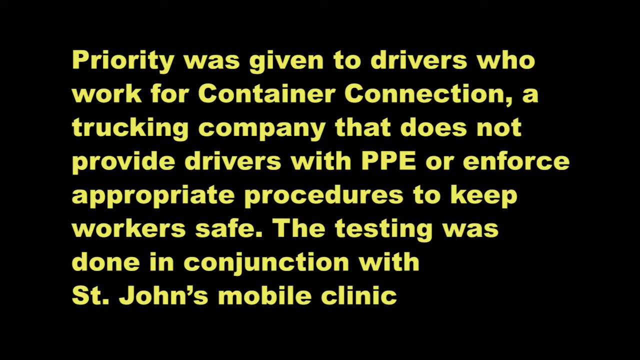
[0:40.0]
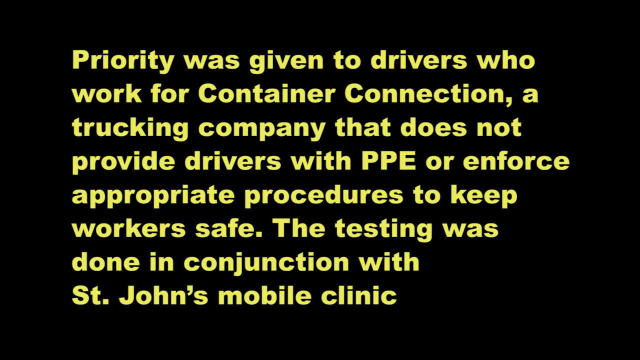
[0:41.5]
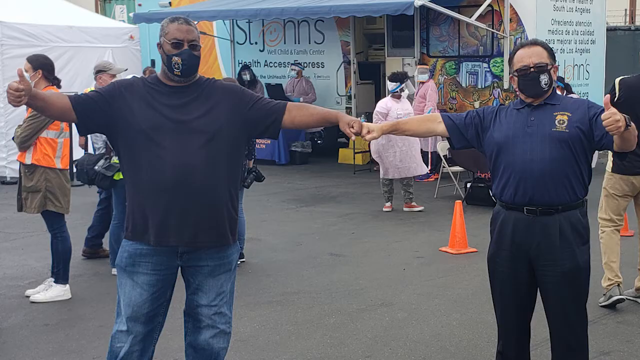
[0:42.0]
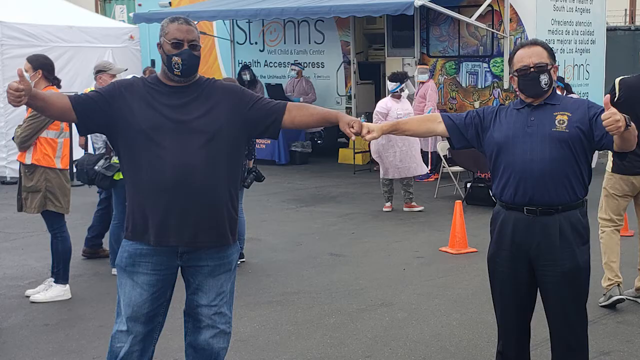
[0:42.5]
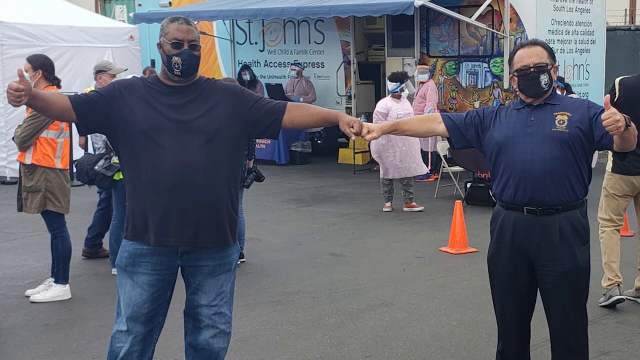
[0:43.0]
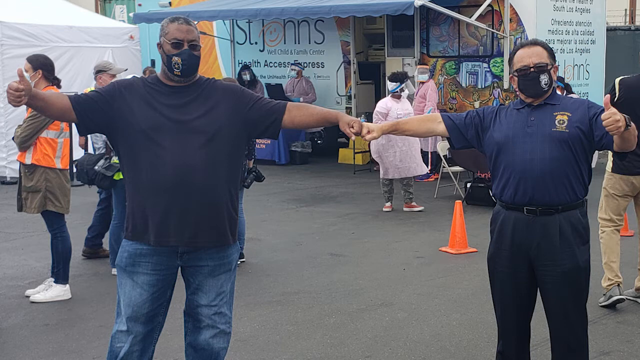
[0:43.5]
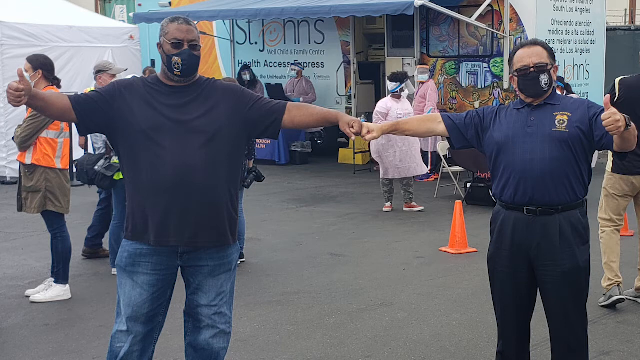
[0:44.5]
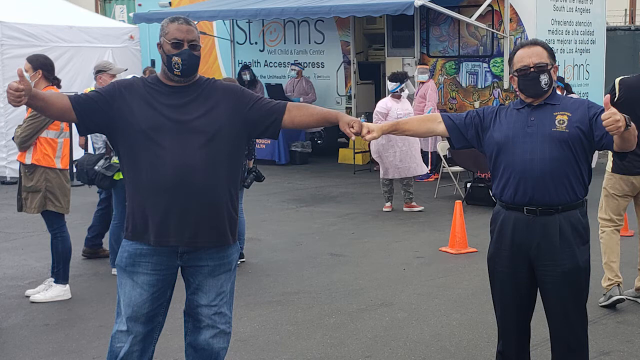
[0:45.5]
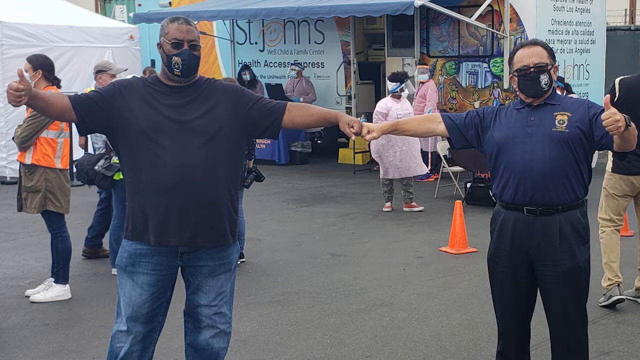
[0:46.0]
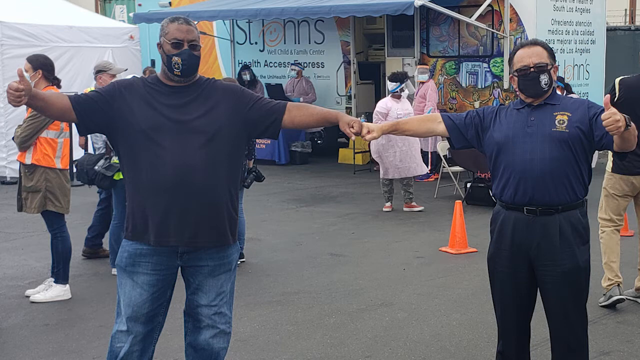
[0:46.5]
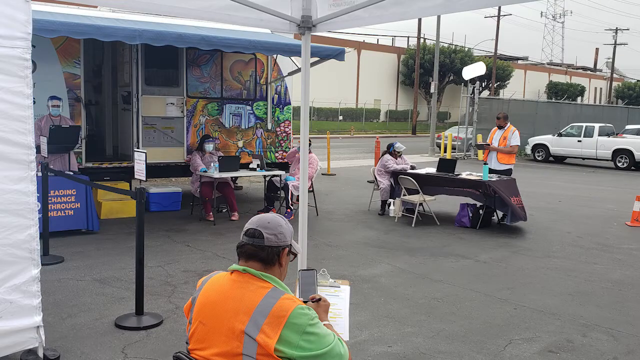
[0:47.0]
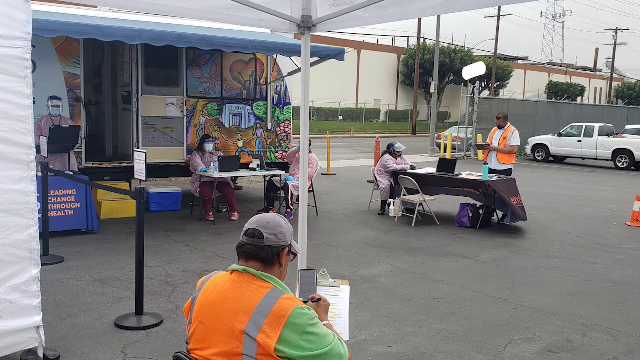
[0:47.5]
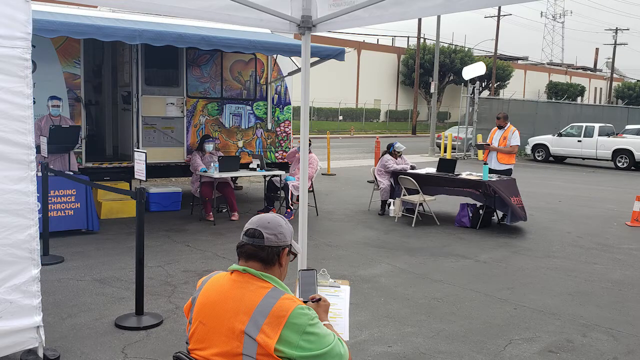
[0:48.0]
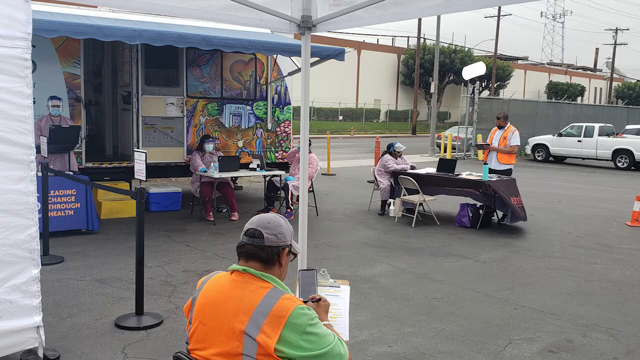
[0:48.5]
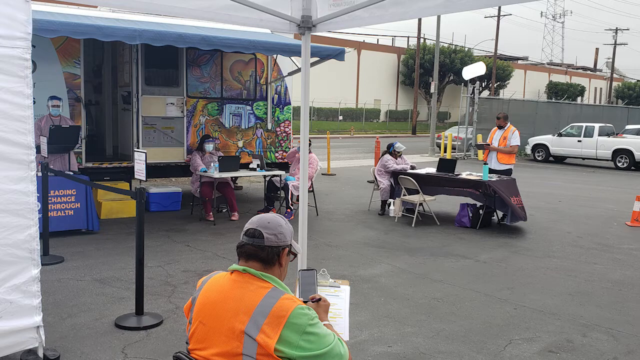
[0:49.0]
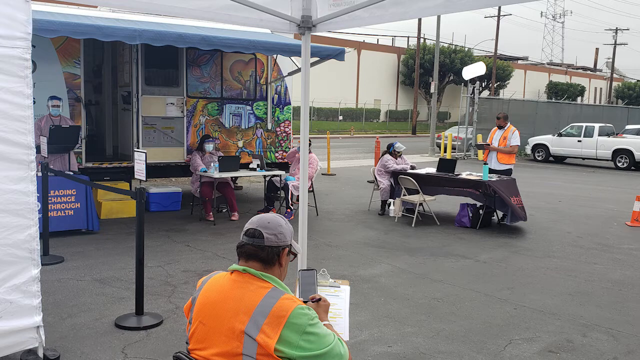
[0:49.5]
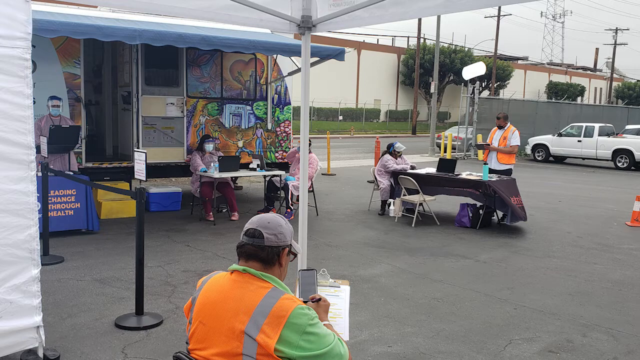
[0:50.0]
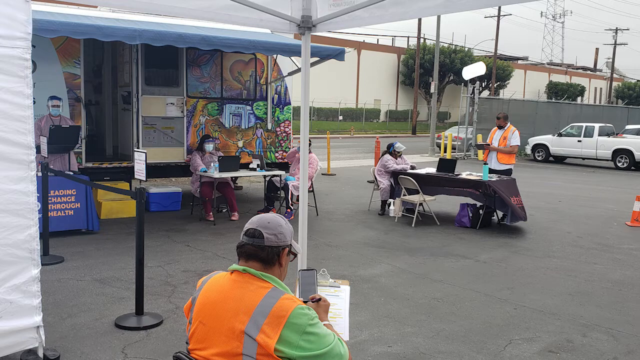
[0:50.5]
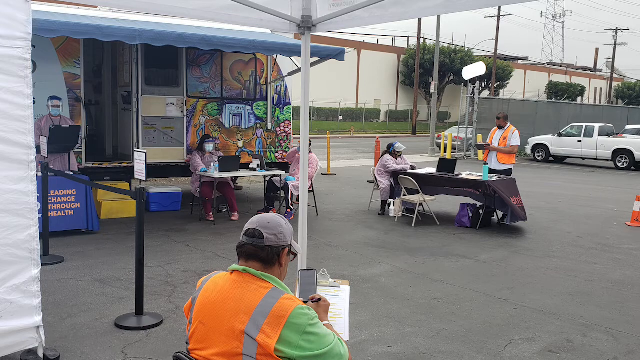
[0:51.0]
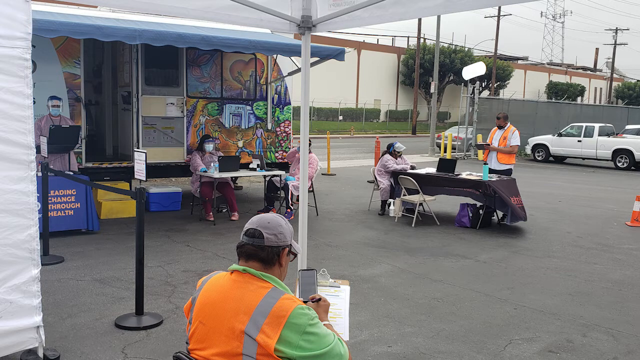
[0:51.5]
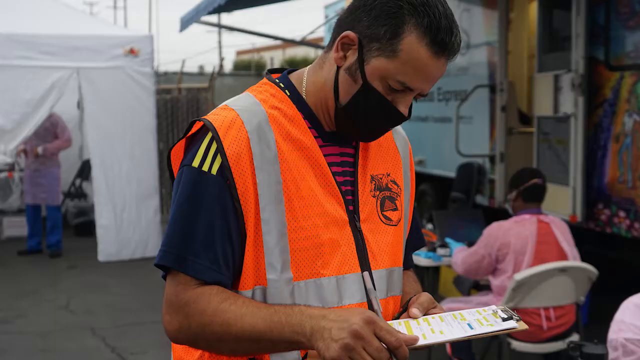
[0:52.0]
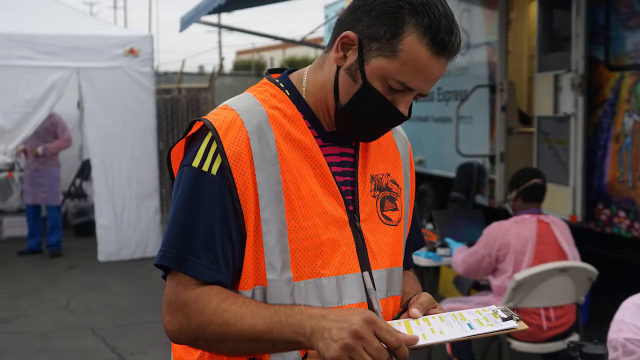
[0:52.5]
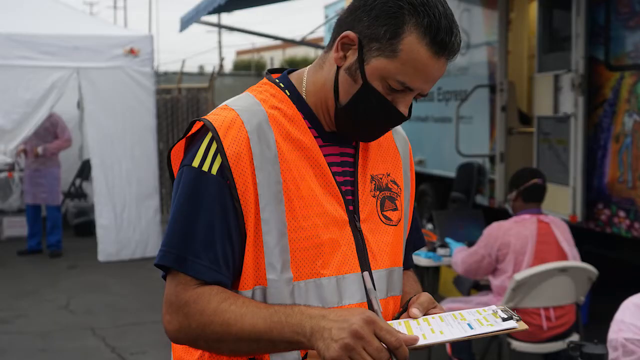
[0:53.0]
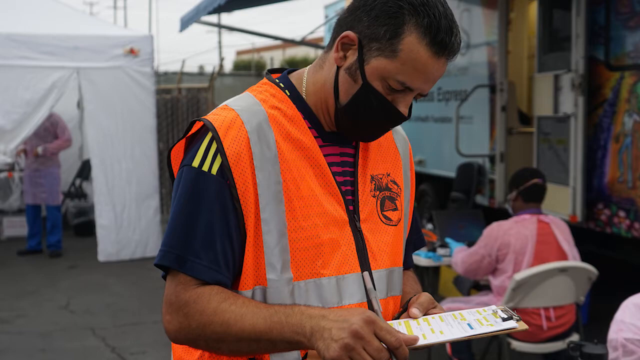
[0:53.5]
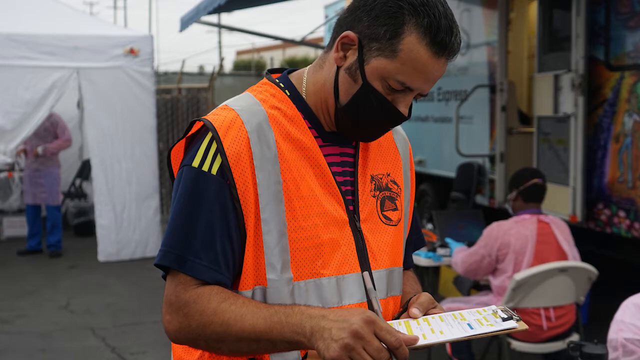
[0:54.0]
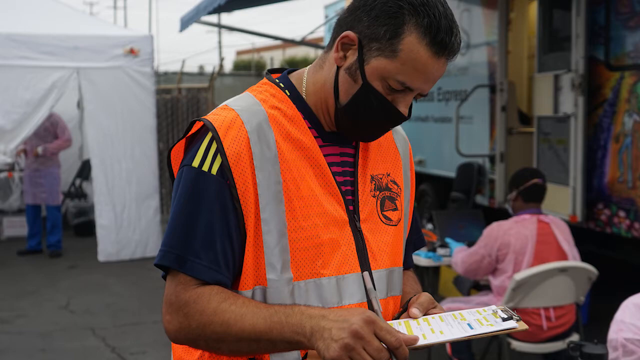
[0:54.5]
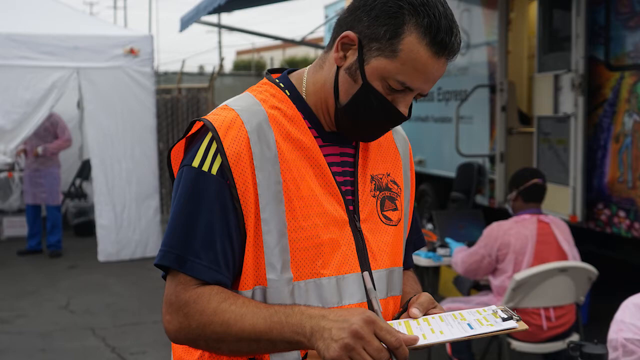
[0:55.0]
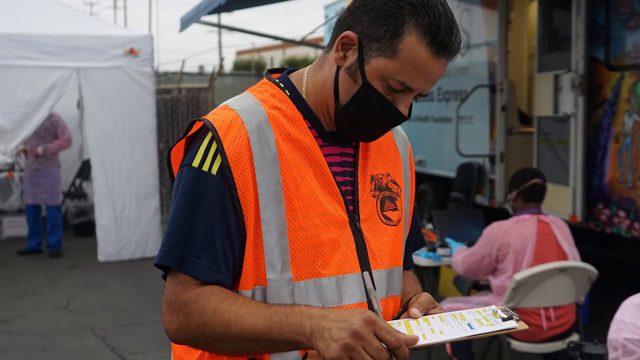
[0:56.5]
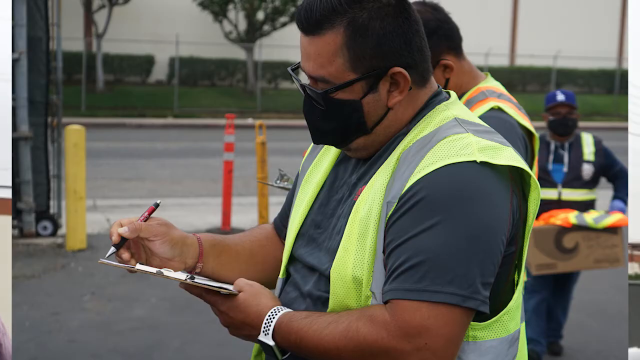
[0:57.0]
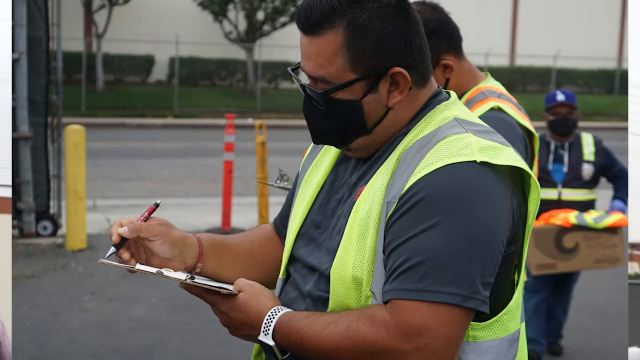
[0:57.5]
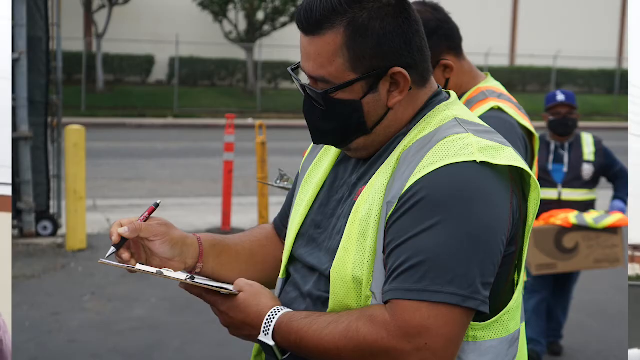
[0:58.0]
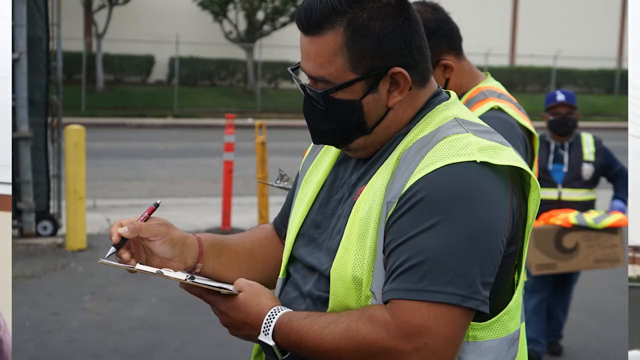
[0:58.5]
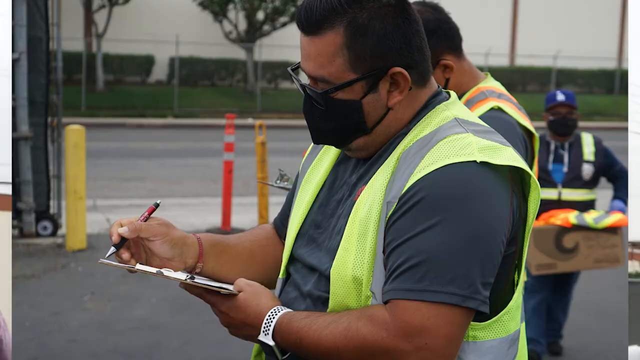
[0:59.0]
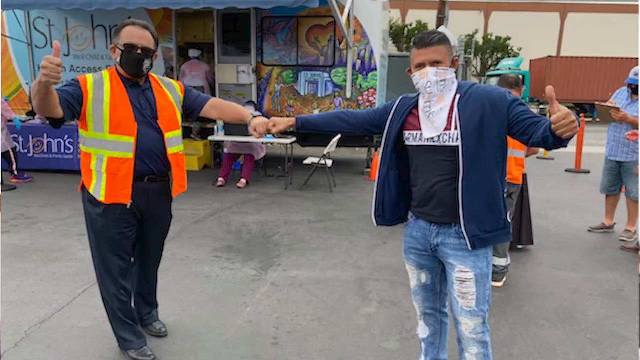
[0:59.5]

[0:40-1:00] A large block of text appears, followed by a photo of two men posing for a picture, one in a black T-shirt and the other in a blue T-shirt. Another camp of people follows: one man in a reflector stands while another is seated, other people sit in different places, and a man sits alone with a phone. A white car is visible. A man in an orange reflector and a mask checks something while holding a pen and paper, and another in a green reflector writes on a paper. Two more men pose for a picture. Then more writing in yellow on black appears. The scenes include different people and items: white chairs, tables with a laptop on one table, and buildings, all on an open ground.